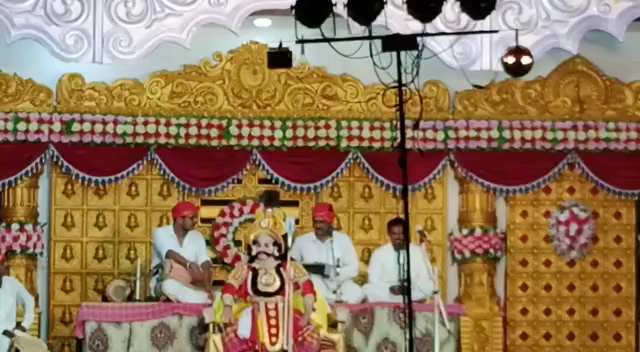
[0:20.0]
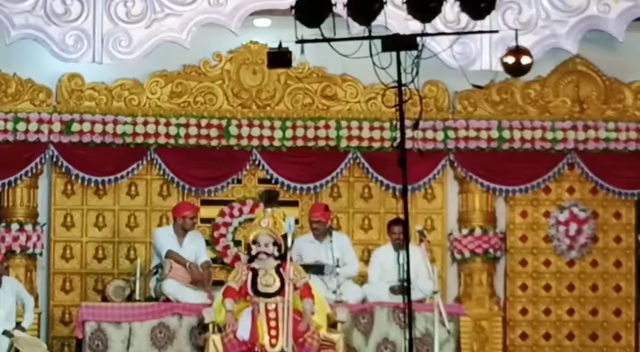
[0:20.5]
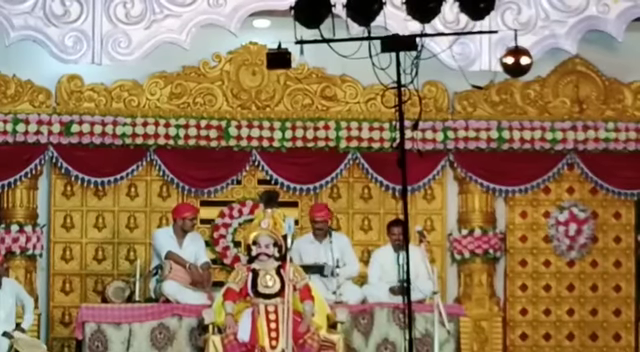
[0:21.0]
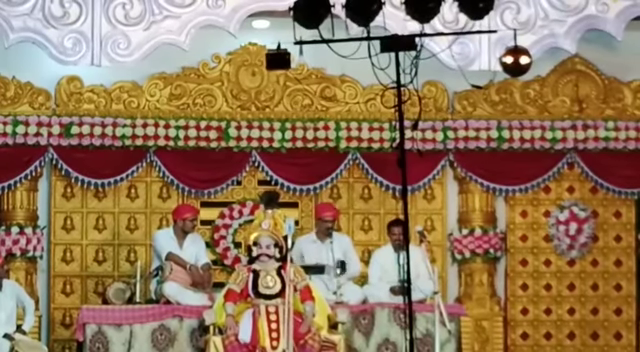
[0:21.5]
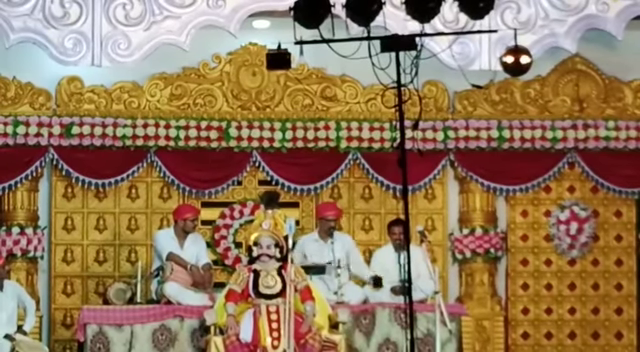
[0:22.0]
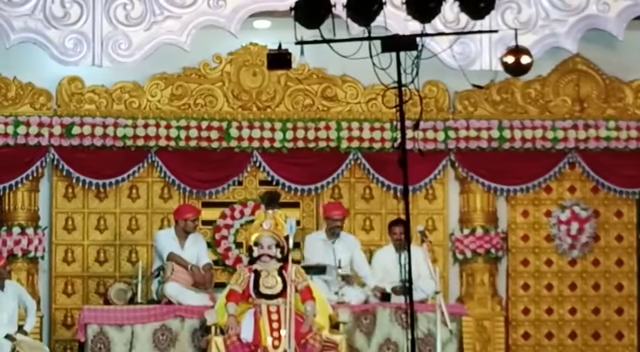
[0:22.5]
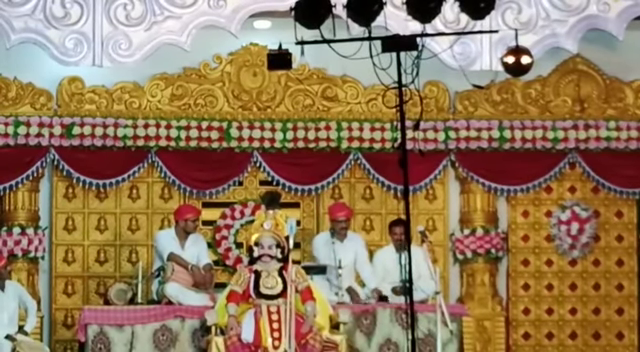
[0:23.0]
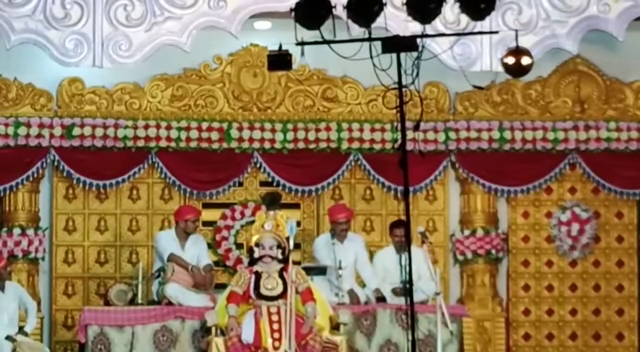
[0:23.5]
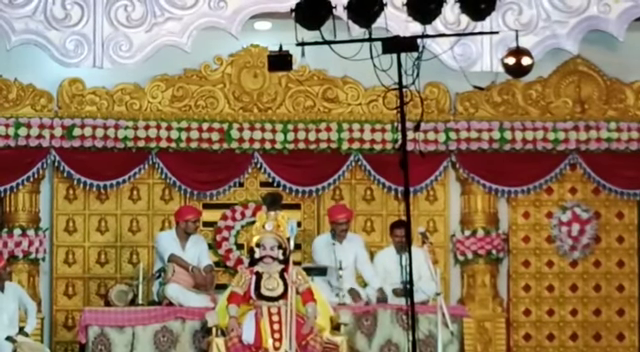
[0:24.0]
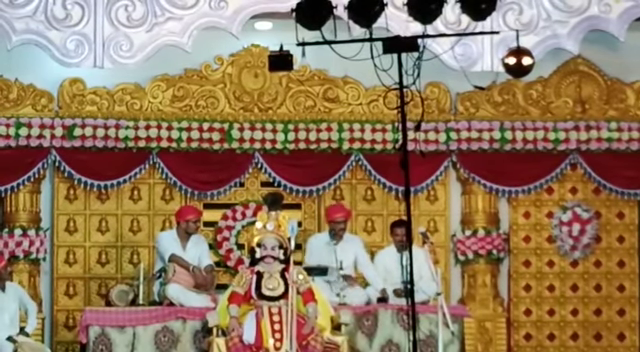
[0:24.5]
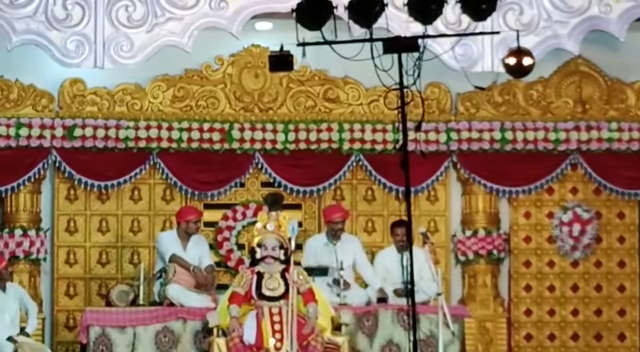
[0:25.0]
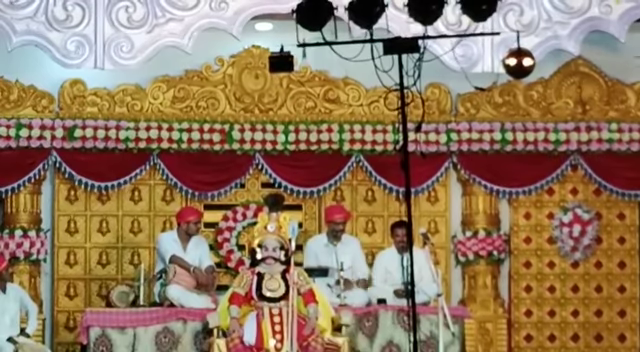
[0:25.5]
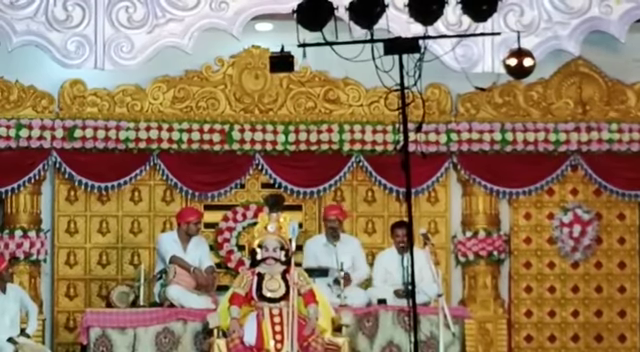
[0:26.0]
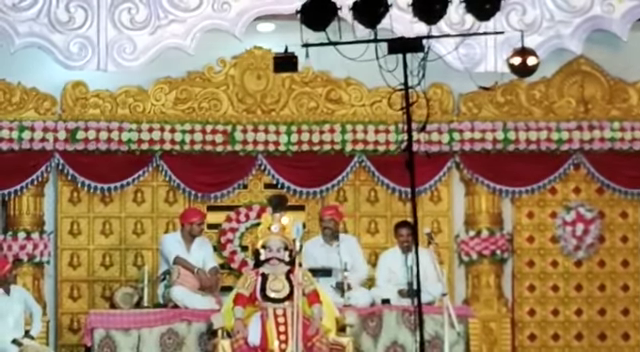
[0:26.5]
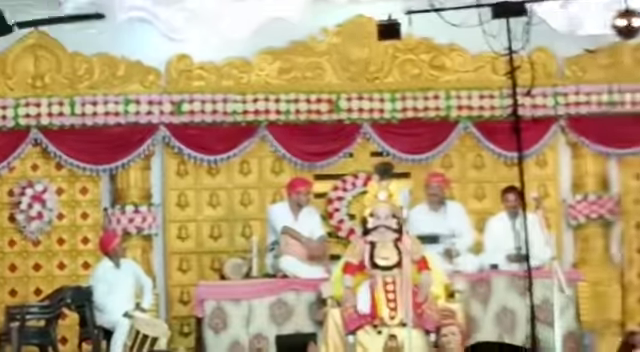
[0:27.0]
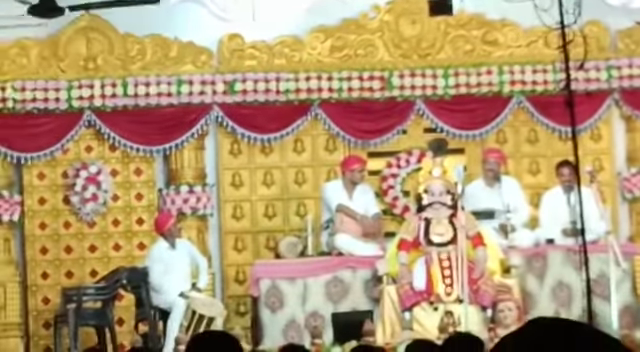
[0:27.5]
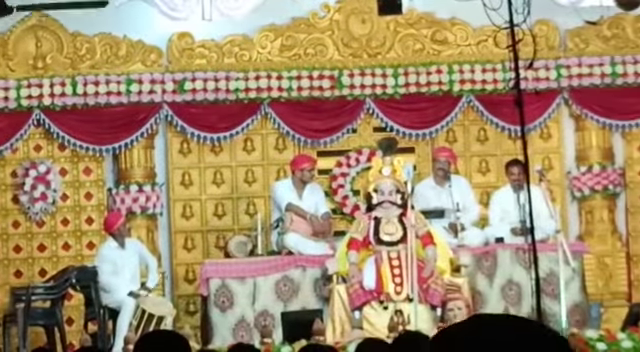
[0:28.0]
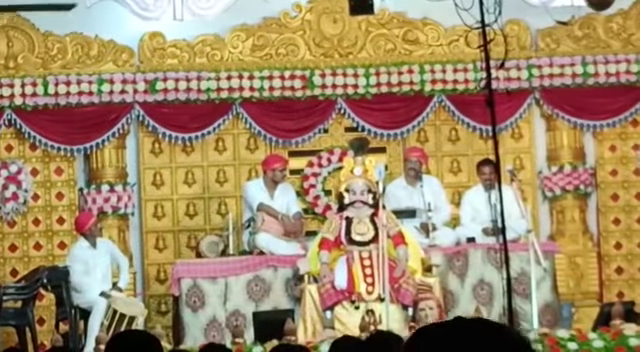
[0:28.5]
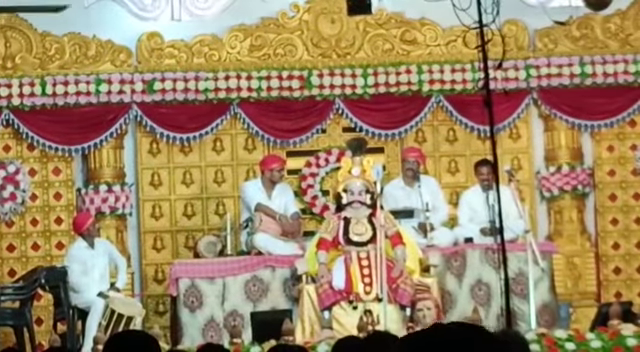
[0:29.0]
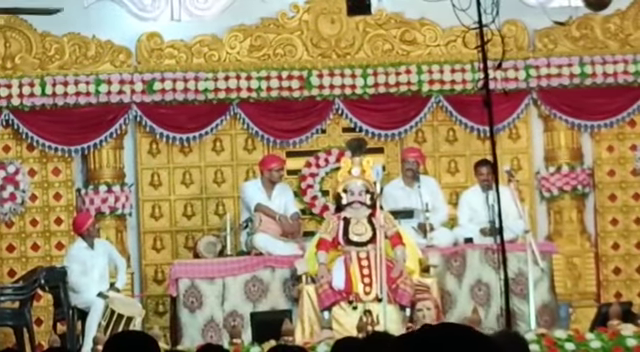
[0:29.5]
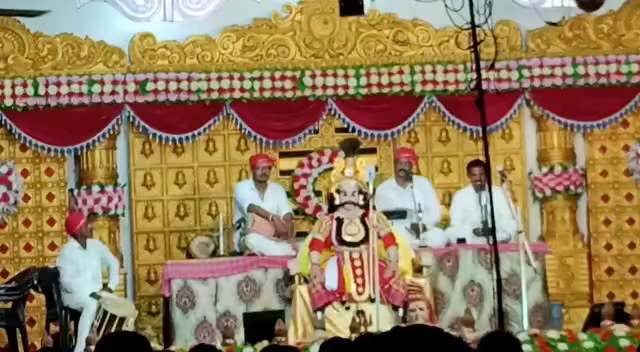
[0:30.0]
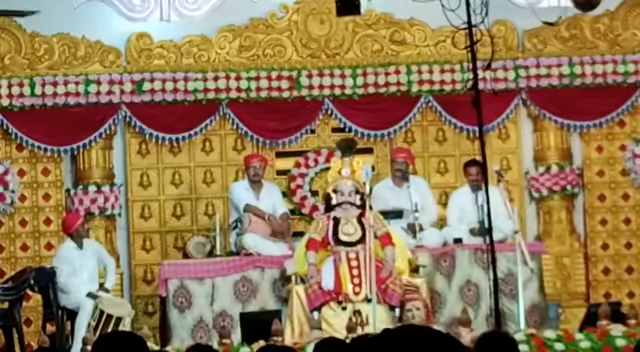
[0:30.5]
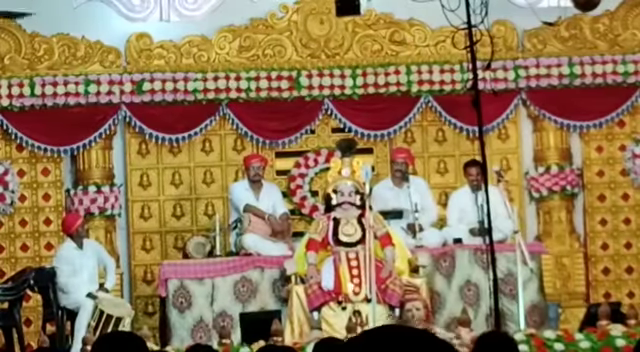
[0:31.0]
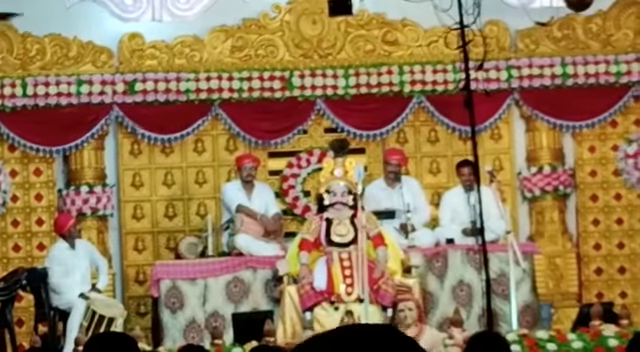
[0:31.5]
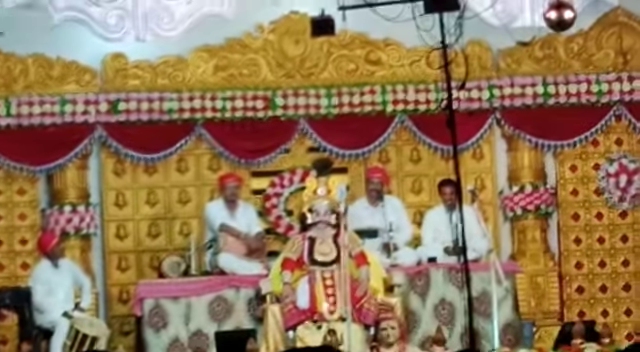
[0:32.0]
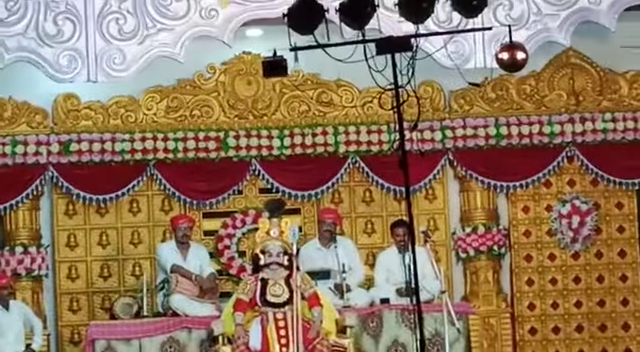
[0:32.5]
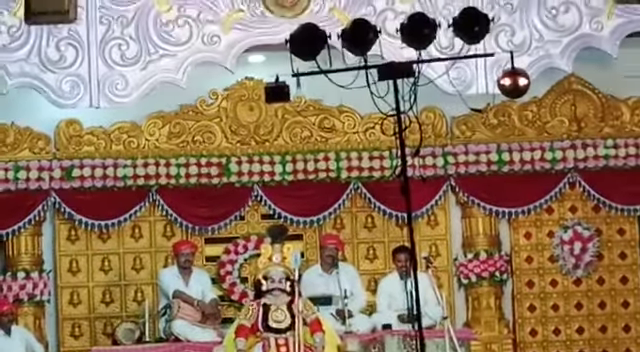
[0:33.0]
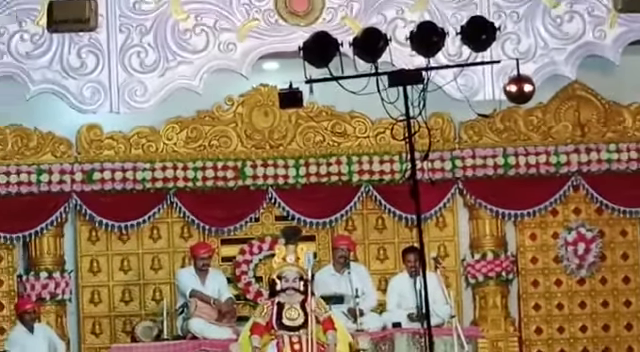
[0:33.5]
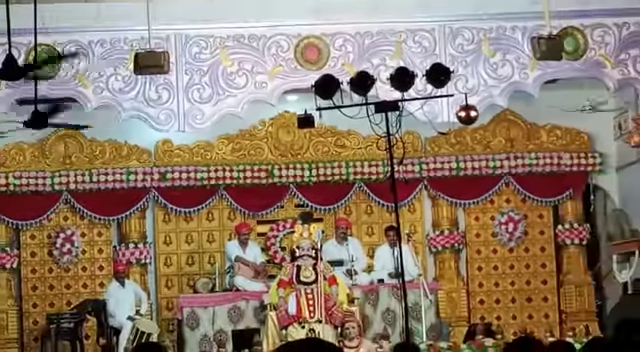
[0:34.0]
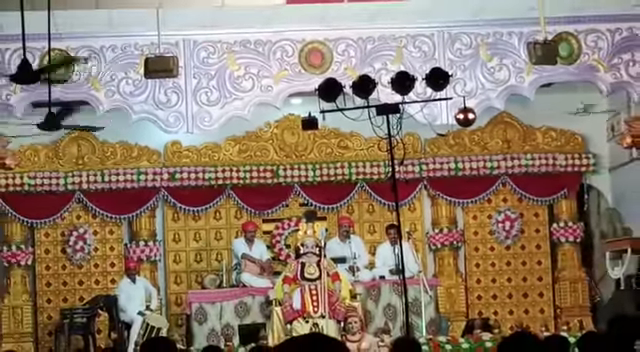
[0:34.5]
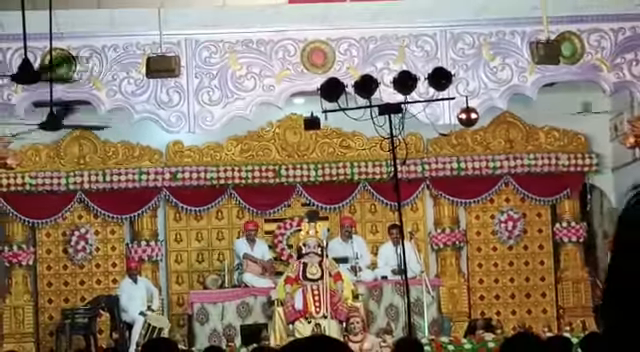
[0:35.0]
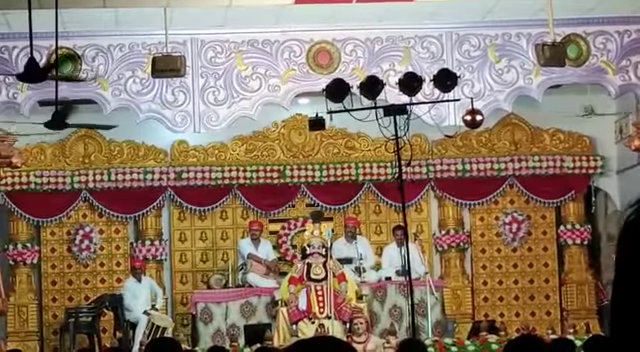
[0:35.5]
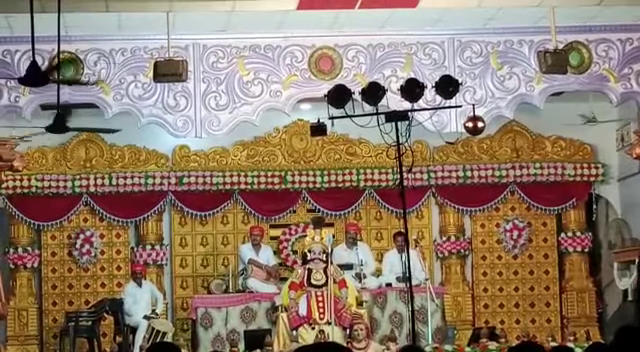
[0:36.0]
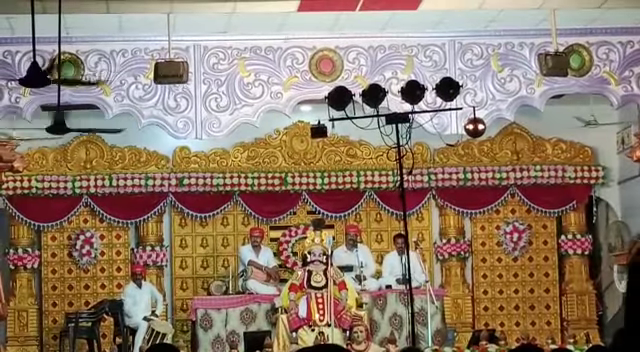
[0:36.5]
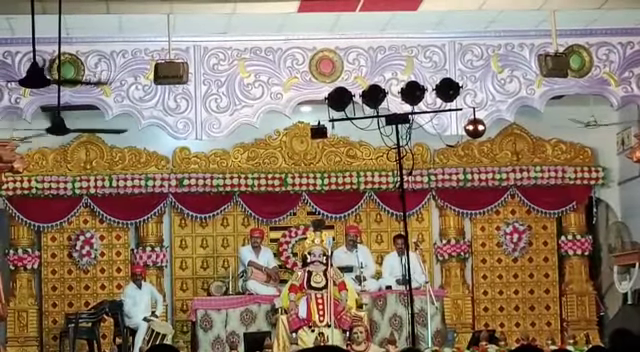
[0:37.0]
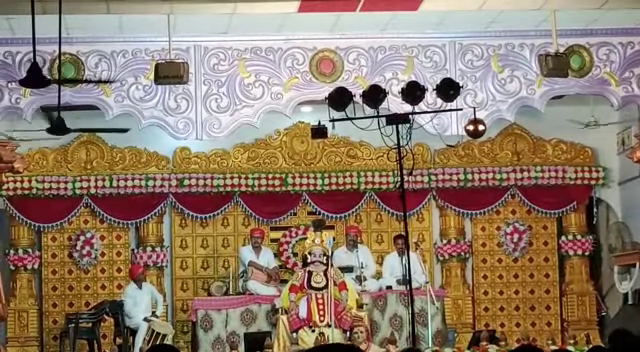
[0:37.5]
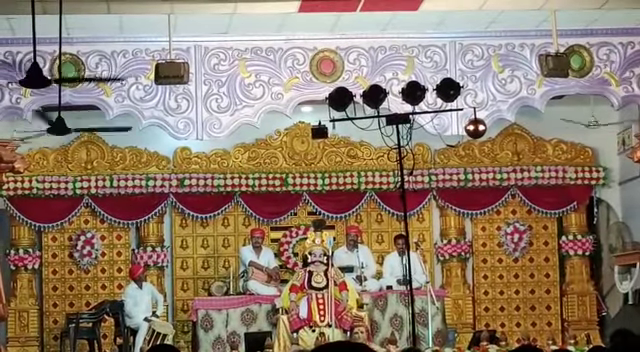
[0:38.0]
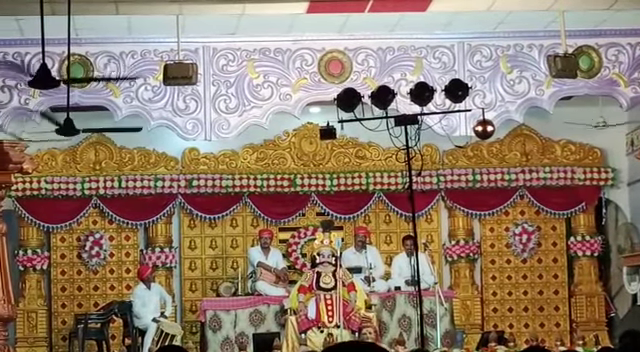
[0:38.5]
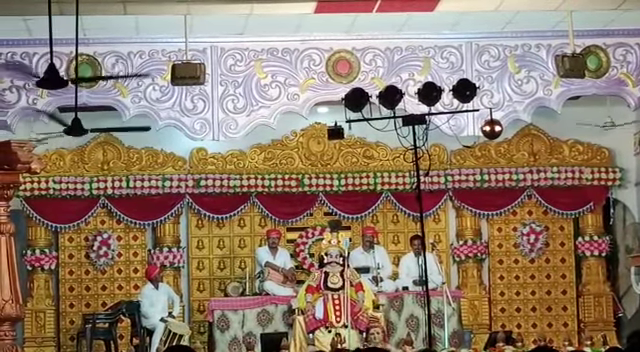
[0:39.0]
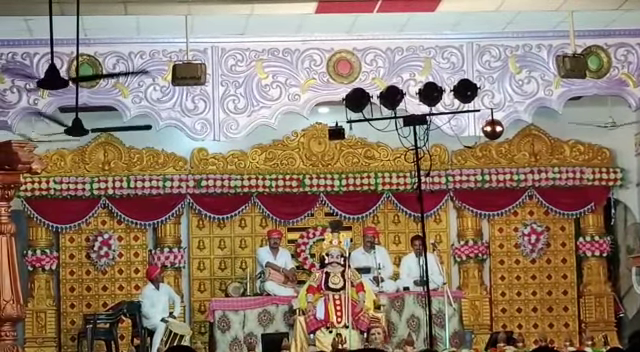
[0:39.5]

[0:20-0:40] Three men who appear to be Indian are on a stage with a statue that appears to be some type of Indian god. In the background are Indian items and architecture, gold, red and tassels. It is perhaps some type of stage performance or some type of lecture given in Indian attire. Two of the men wear turbans, and it appears to be a stage where they may be performing something, some type of acting.